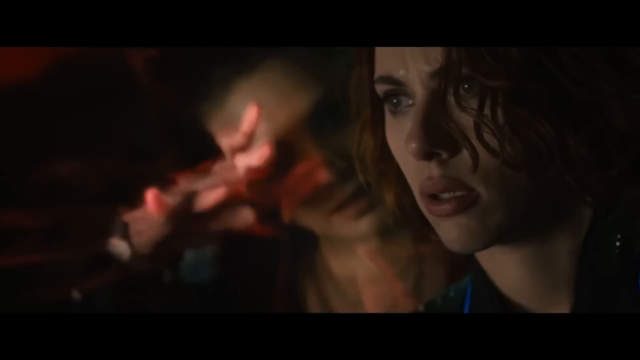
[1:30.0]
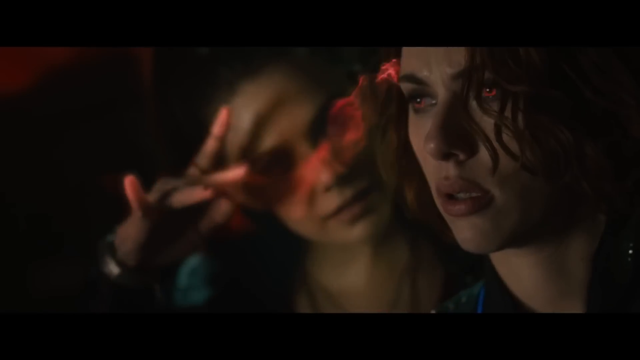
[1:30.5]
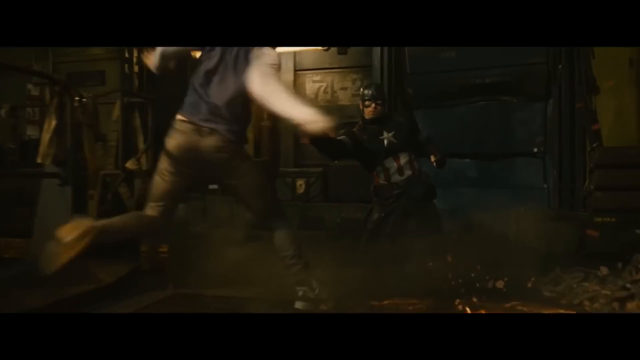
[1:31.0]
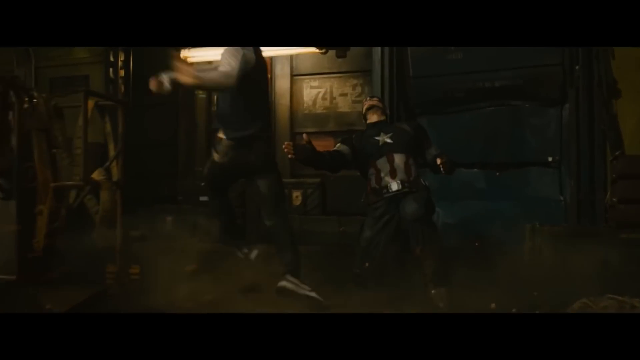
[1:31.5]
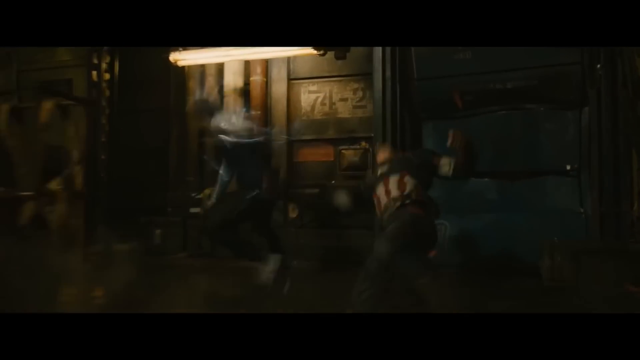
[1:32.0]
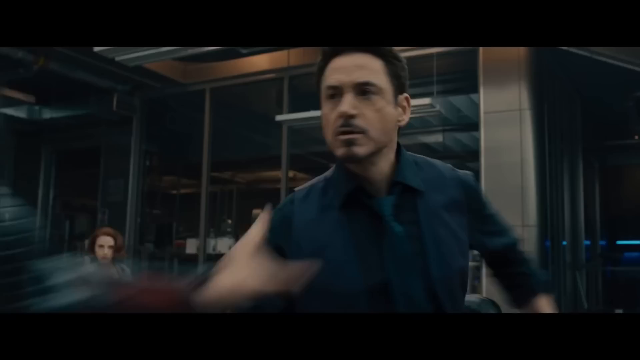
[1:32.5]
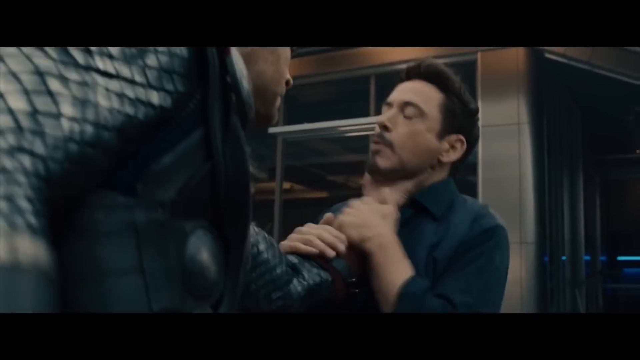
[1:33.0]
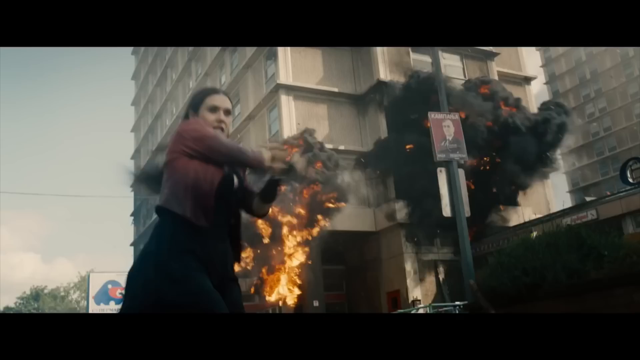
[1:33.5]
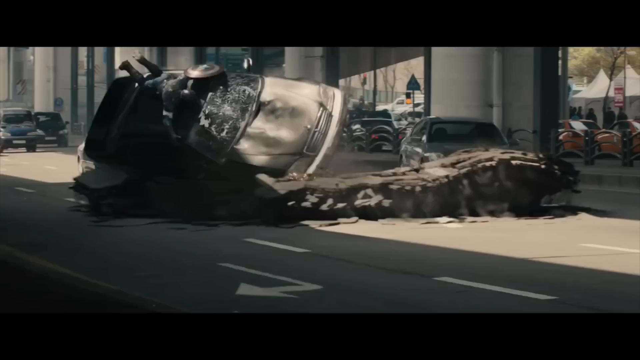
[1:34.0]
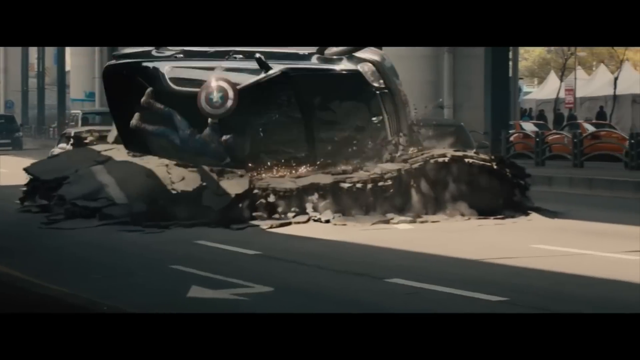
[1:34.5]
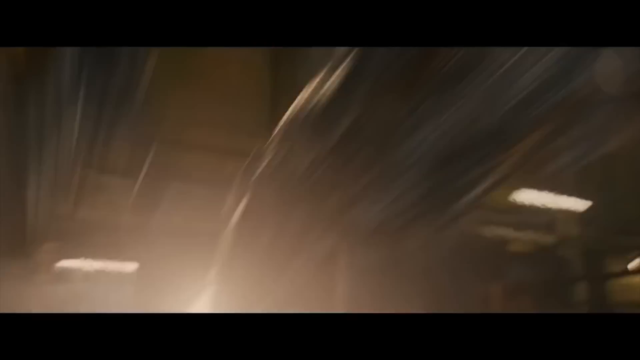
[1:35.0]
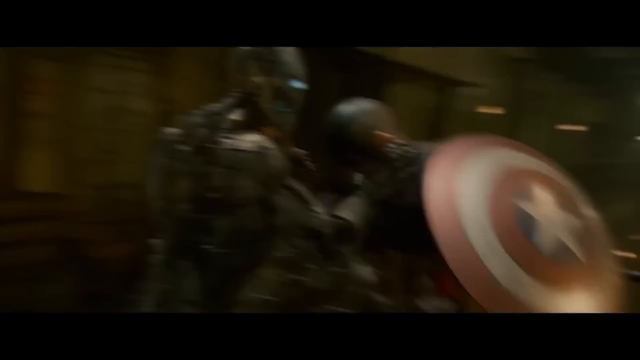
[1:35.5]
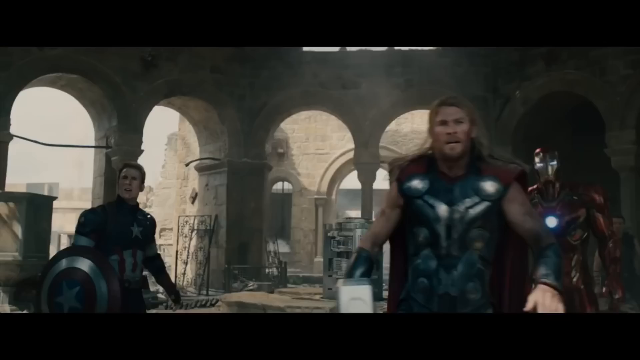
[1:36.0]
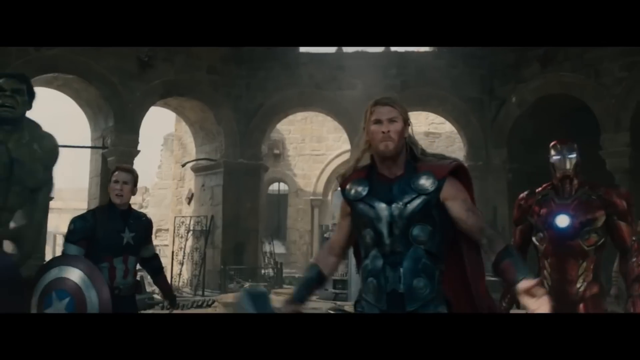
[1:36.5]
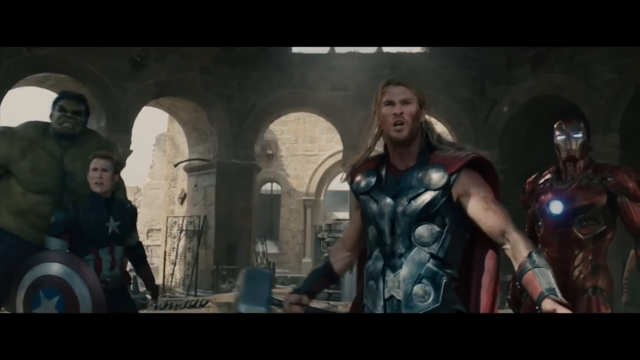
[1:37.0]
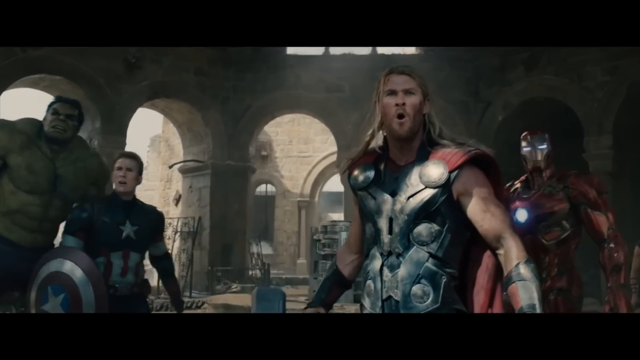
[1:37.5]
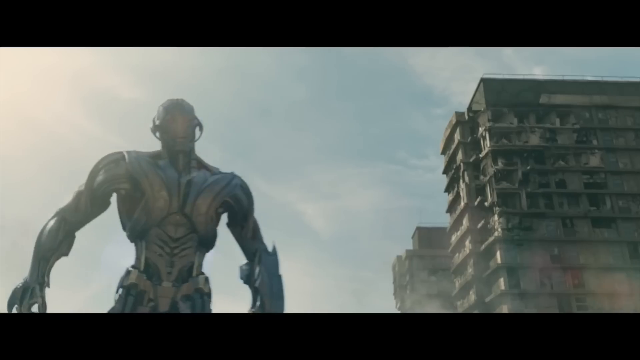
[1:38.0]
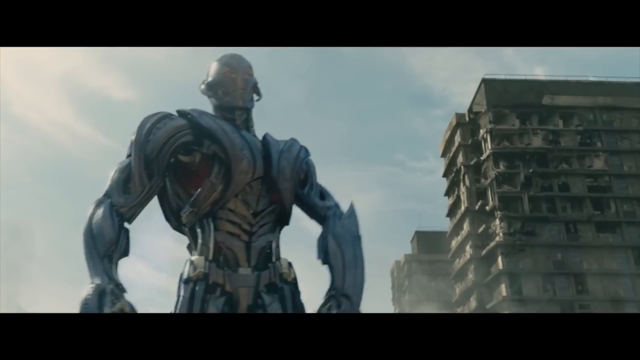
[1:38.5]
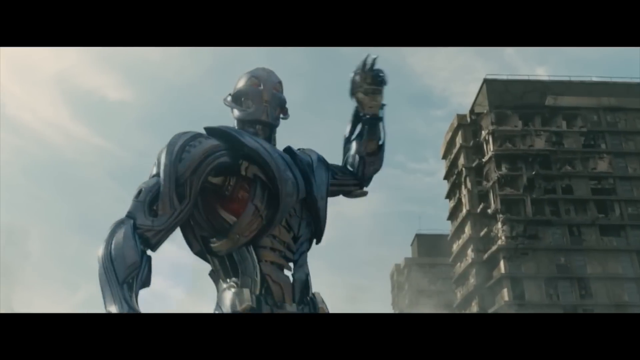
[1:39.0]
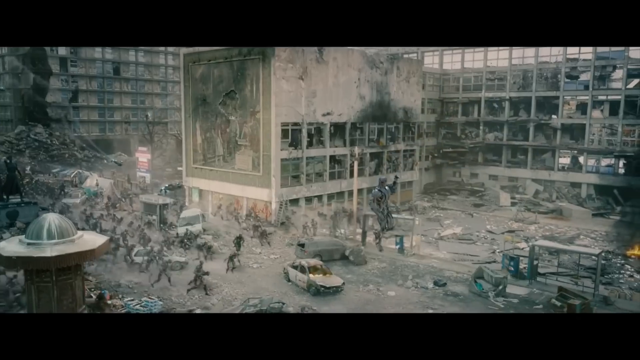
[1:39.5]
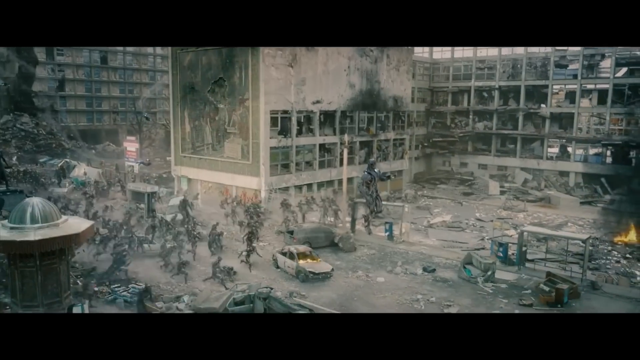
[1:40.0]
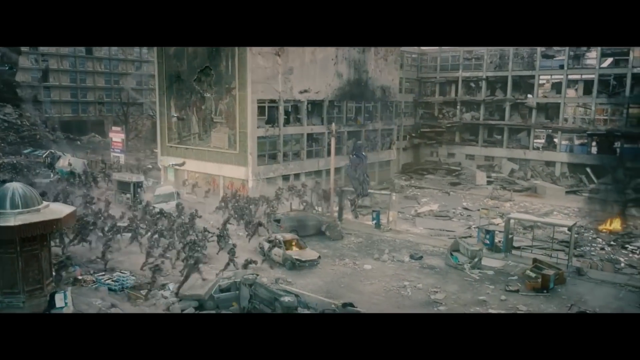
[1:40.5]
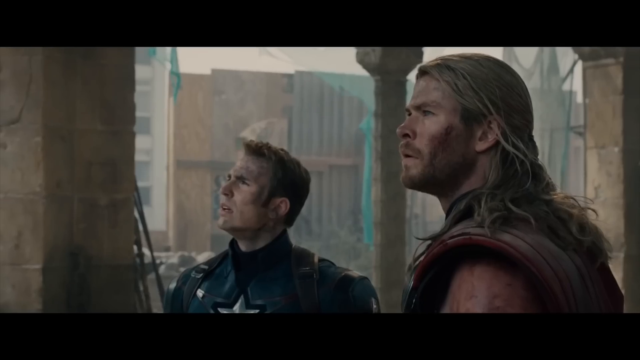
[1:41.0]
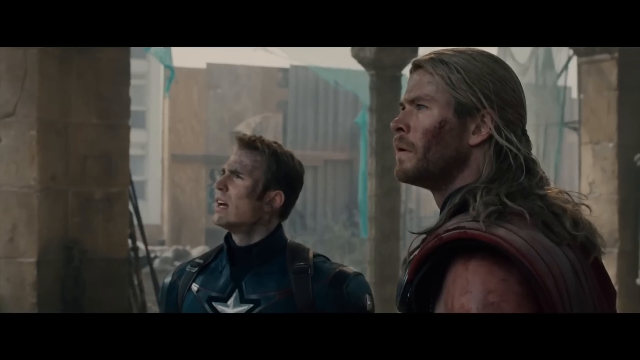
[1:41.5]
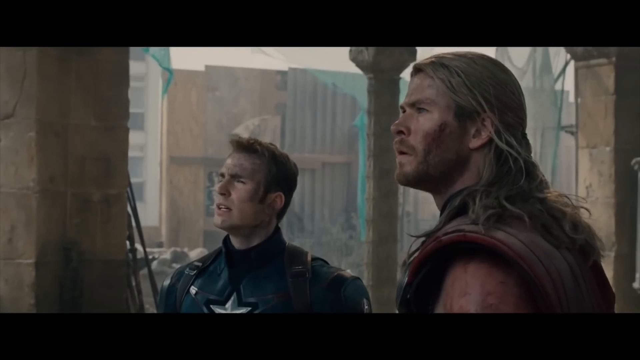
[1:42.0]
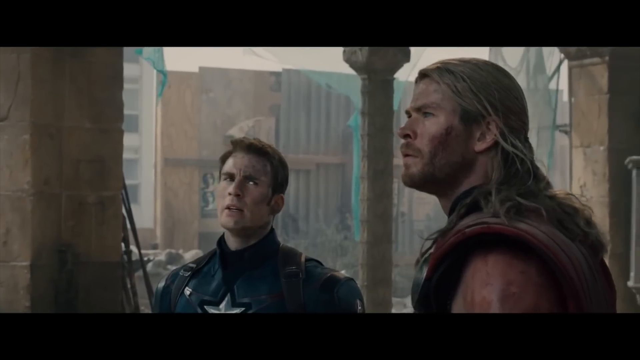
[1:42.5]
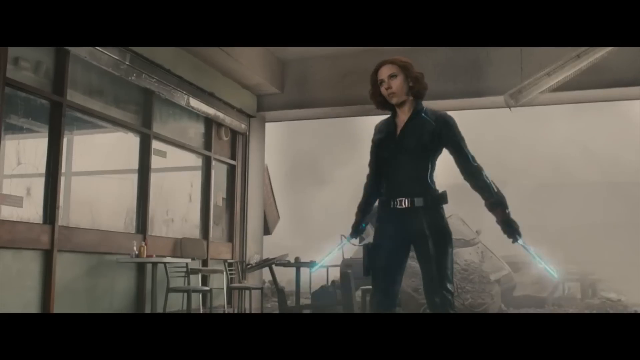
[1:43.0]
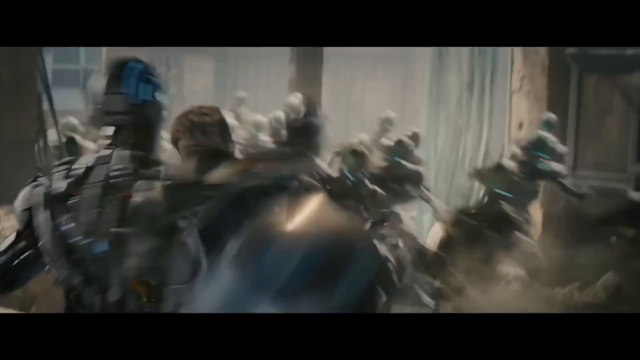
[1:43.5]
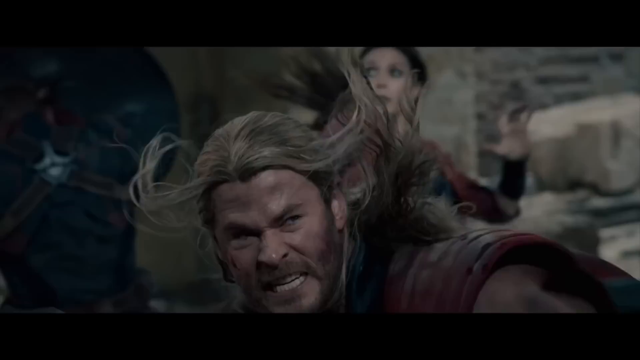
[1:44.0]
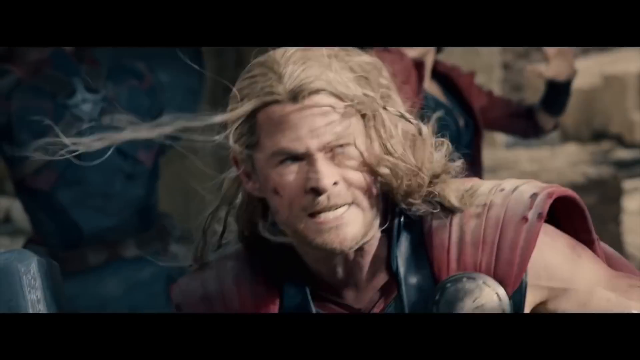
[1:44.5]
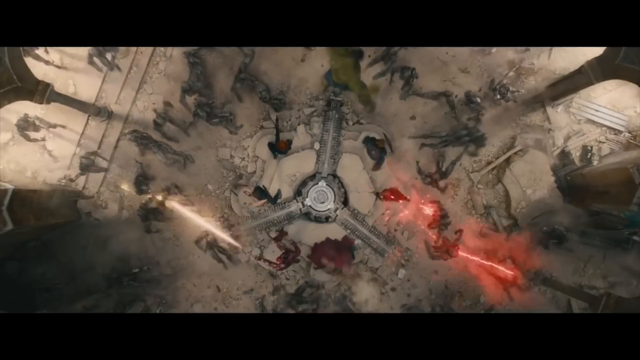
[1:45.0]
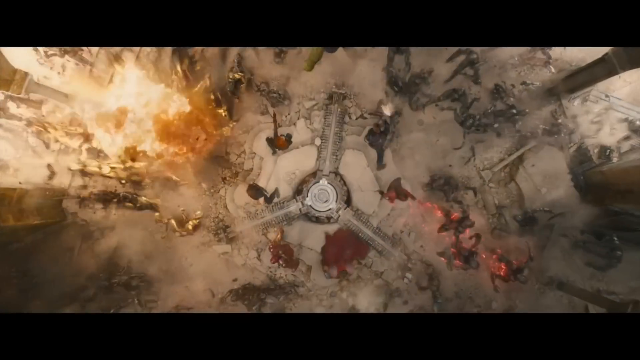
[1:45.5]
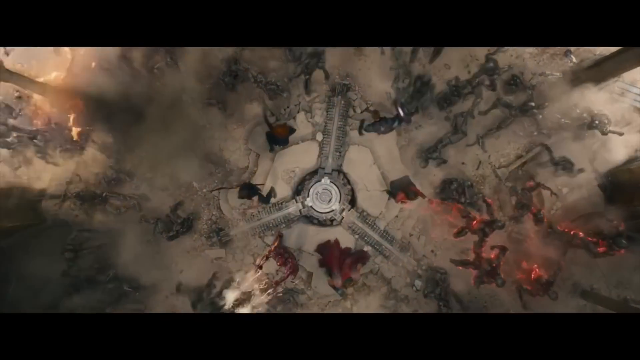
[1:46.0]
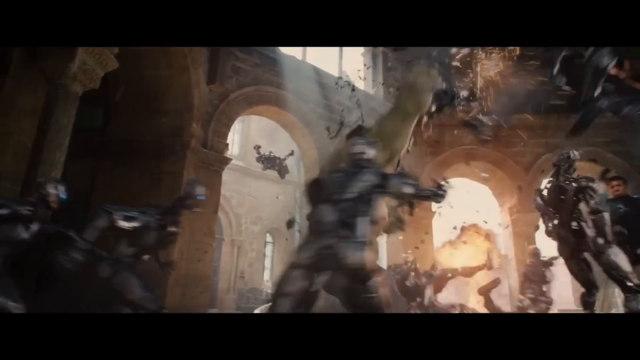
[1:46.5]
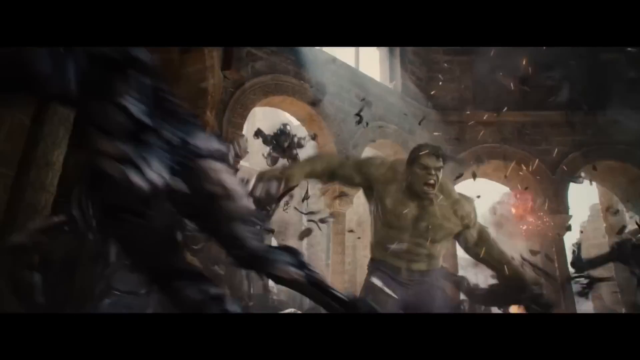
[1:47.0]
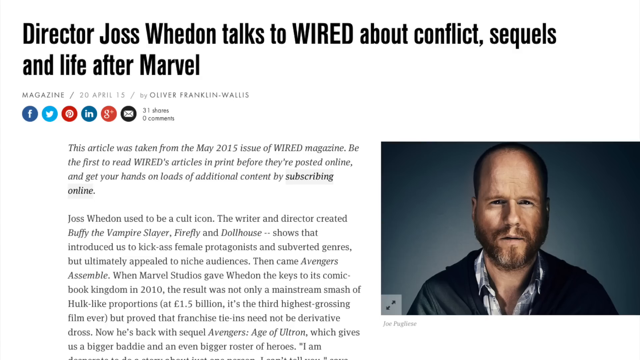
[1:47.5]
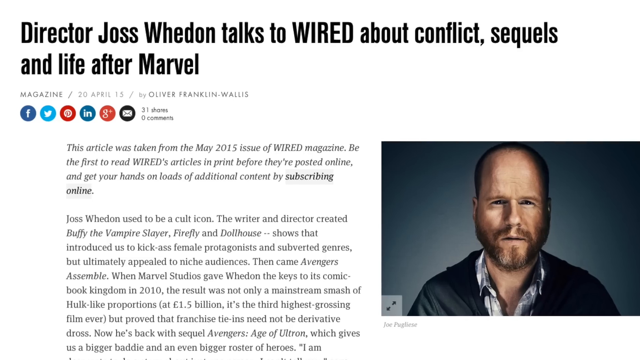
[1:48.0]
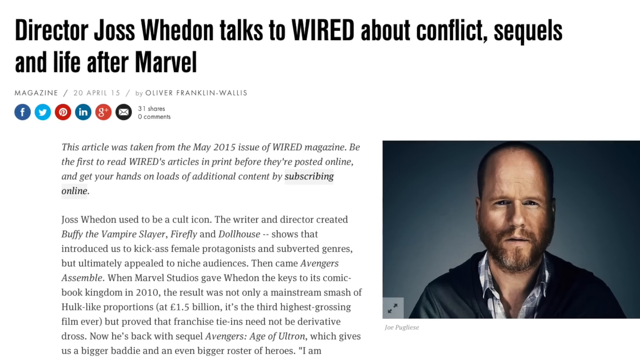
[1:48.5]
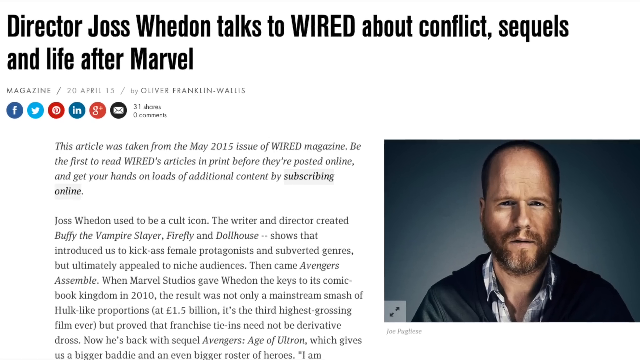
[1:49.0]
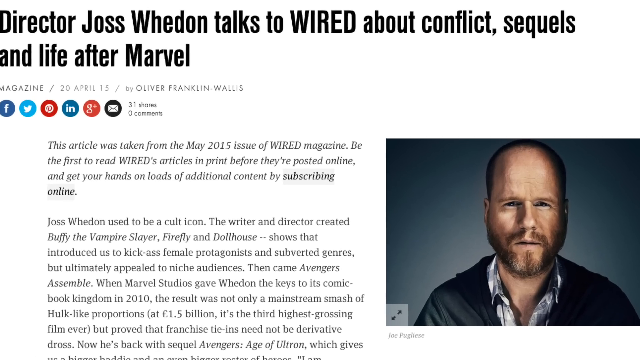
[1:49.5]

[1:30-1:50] A woman with ginger hair looks distressed, her hair looking messy, as though she has been possessed by the witch, who creates spells from her fingers. Captain America fights an individual and is then beaten up. Thor chokes Iron Man, and there is more fighting in the streets. The Avengers assemble together, and Thor leaves. A bunch of small ones come together with the big ones. Thor and more of the Avengers are in pain, with wounds on their faces. Hulk appears, and then a newspaper or letter from director Josh is shown.